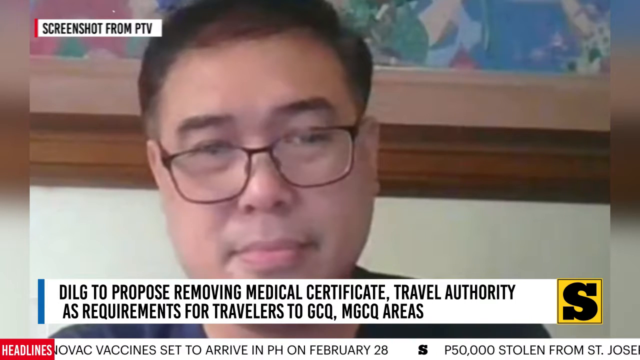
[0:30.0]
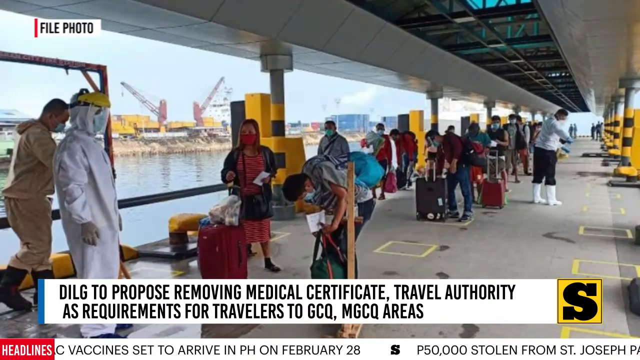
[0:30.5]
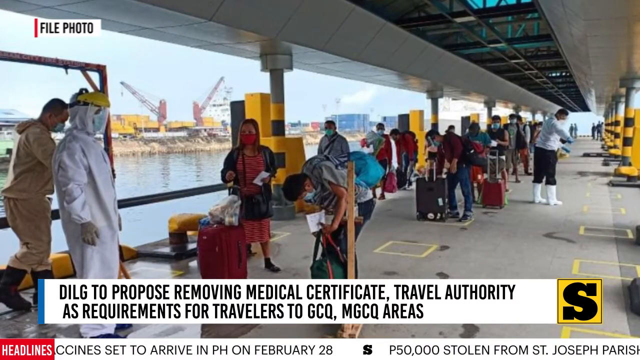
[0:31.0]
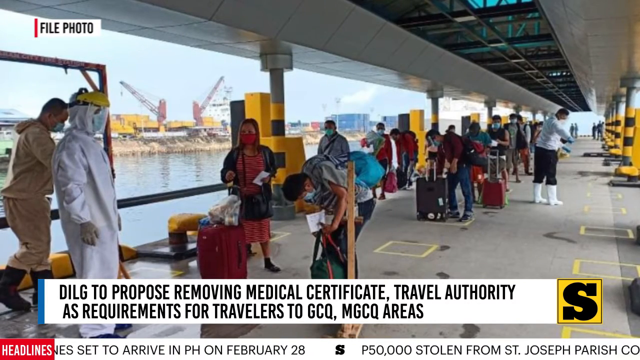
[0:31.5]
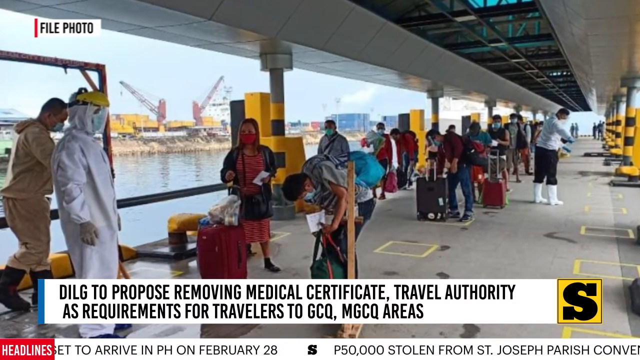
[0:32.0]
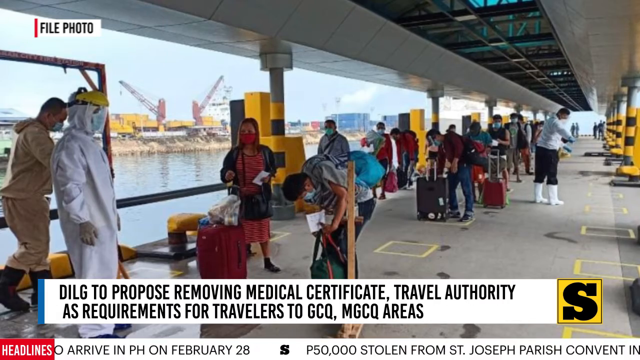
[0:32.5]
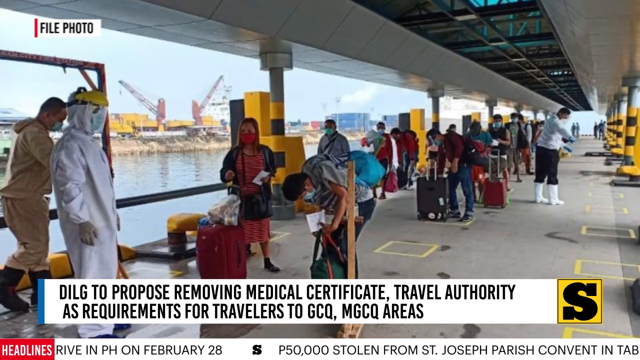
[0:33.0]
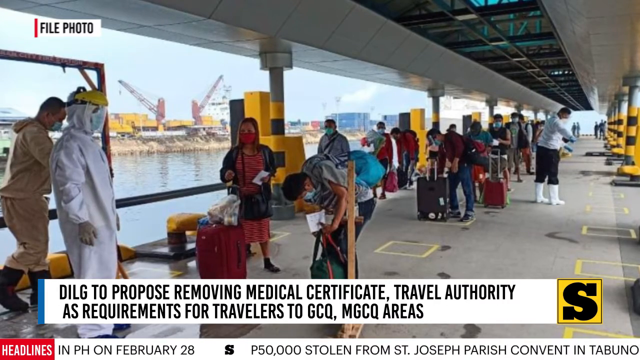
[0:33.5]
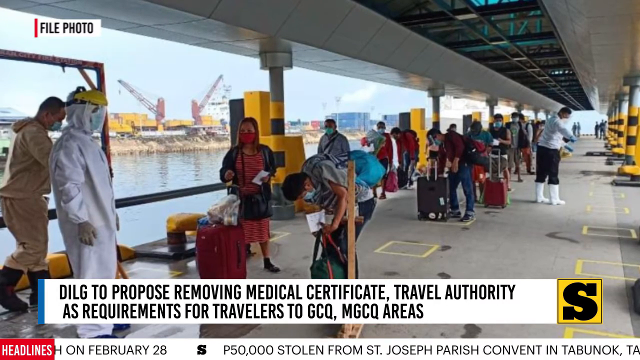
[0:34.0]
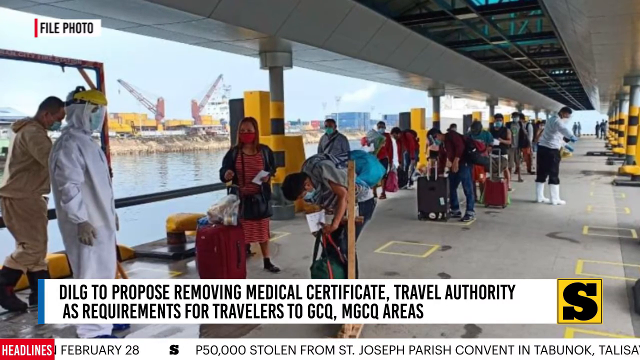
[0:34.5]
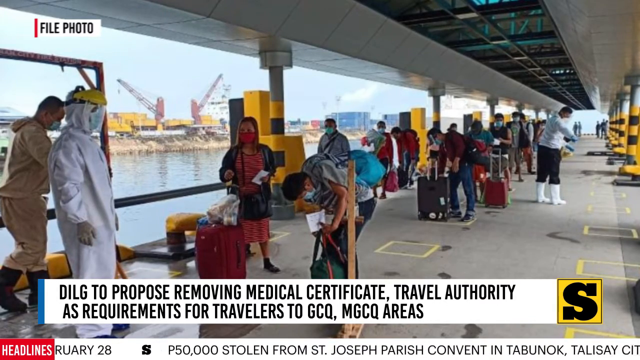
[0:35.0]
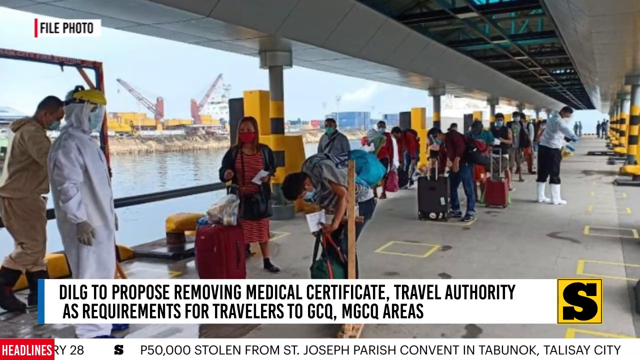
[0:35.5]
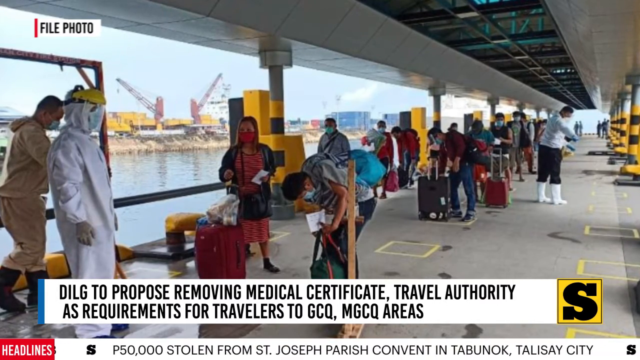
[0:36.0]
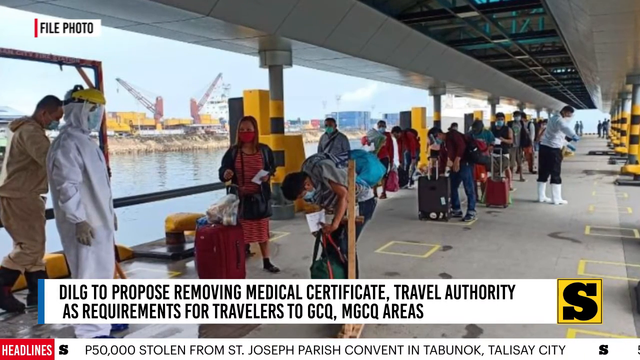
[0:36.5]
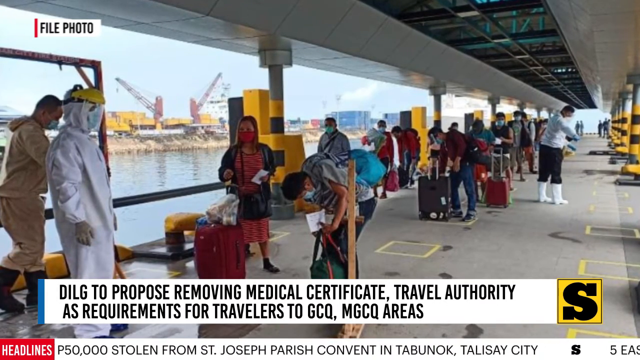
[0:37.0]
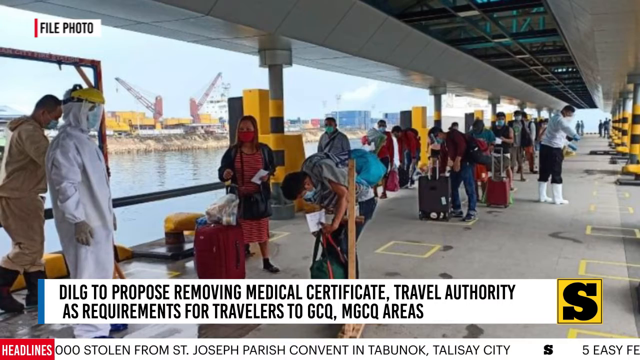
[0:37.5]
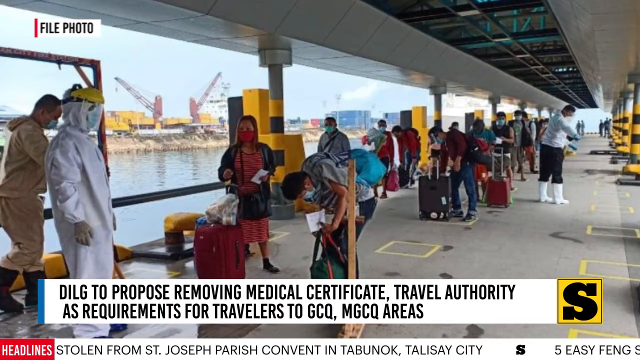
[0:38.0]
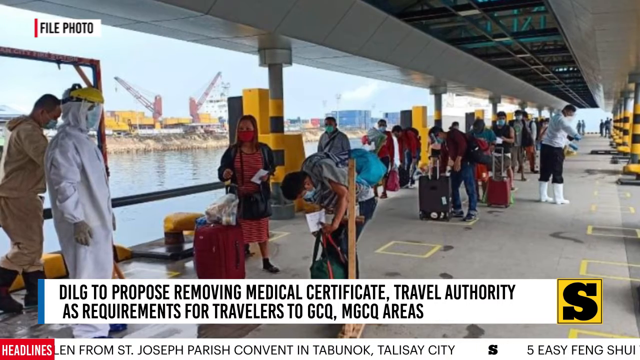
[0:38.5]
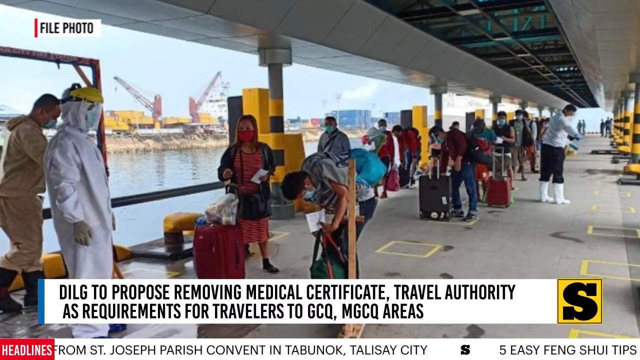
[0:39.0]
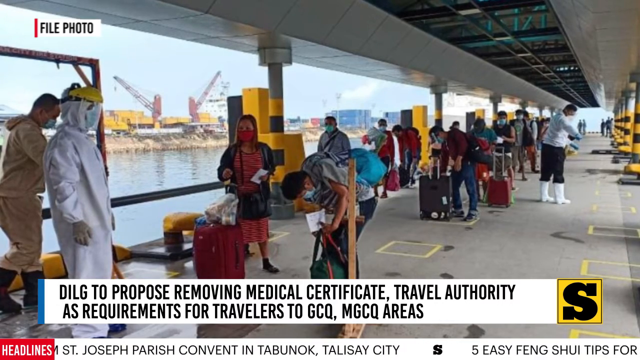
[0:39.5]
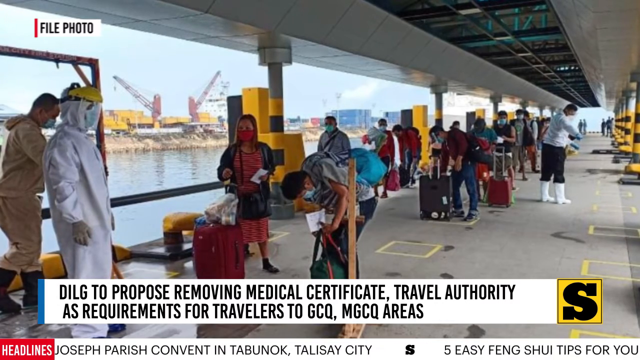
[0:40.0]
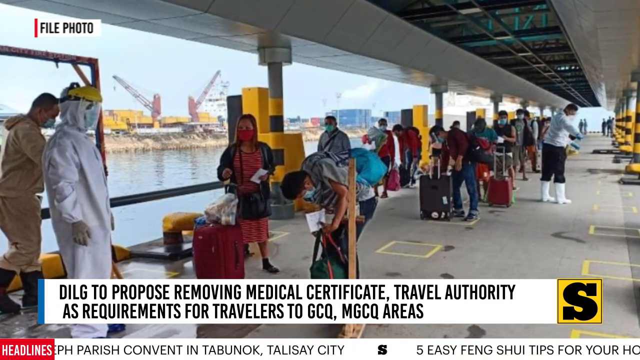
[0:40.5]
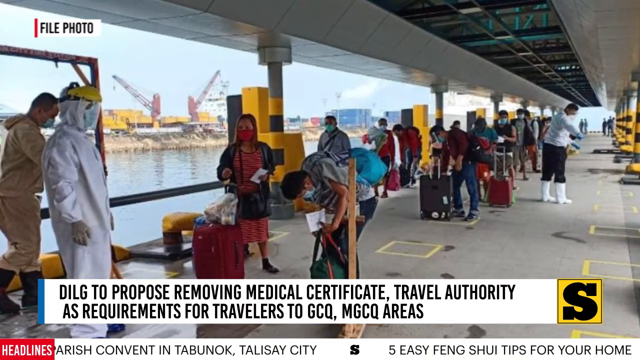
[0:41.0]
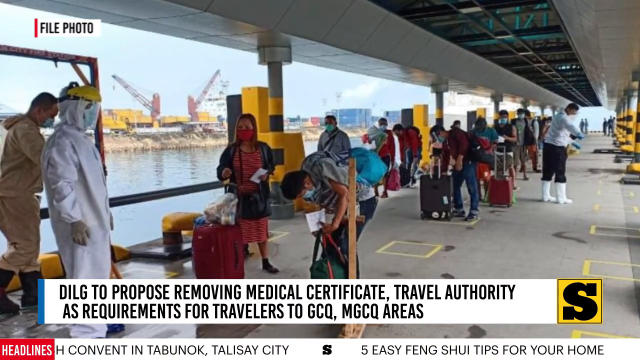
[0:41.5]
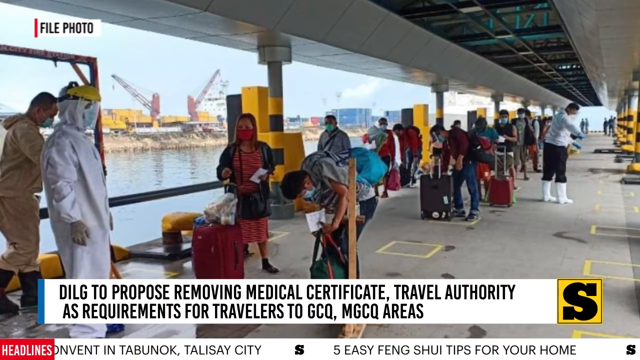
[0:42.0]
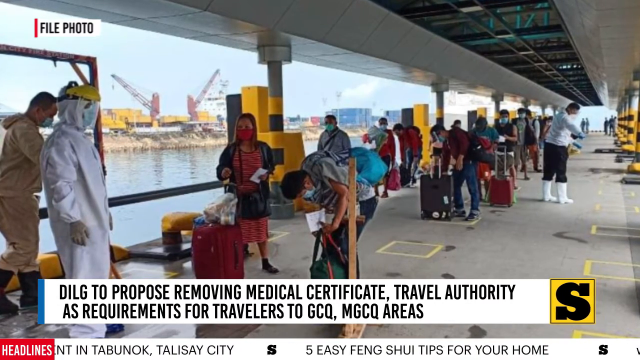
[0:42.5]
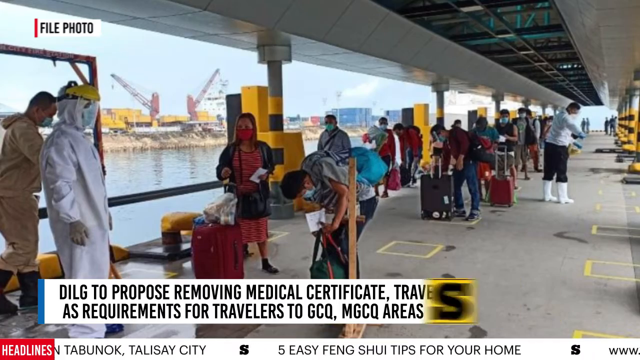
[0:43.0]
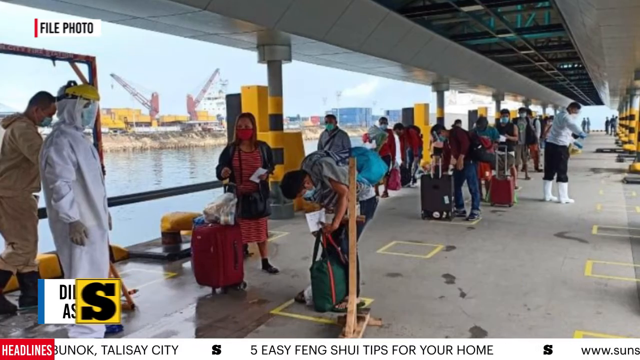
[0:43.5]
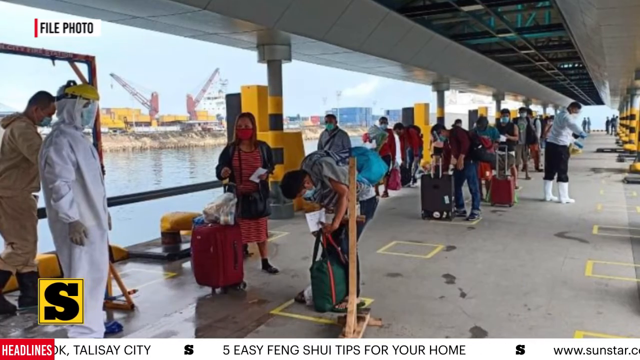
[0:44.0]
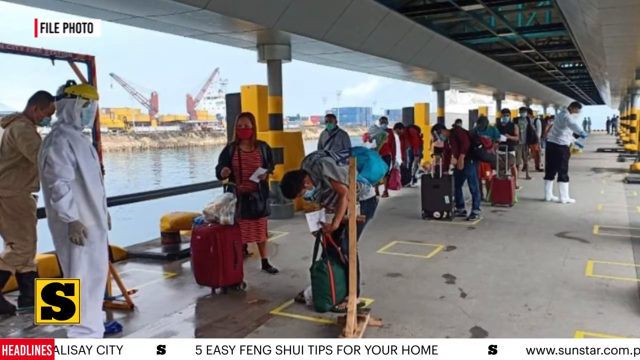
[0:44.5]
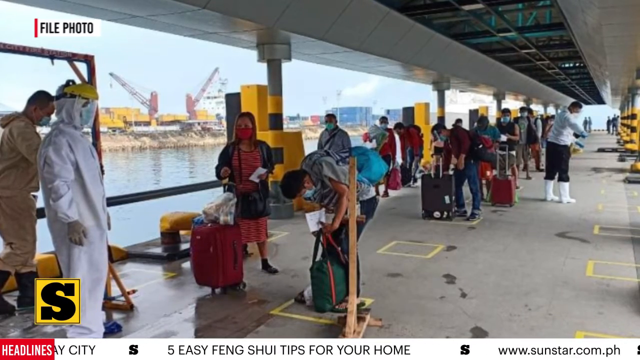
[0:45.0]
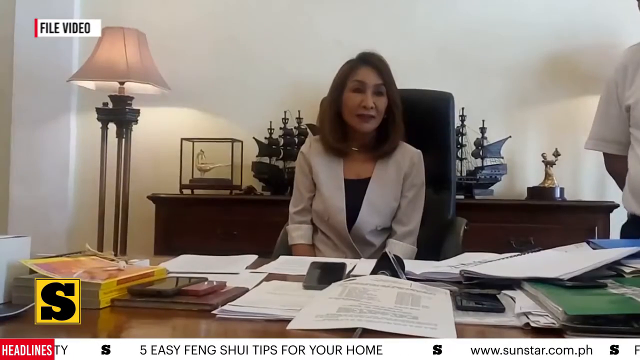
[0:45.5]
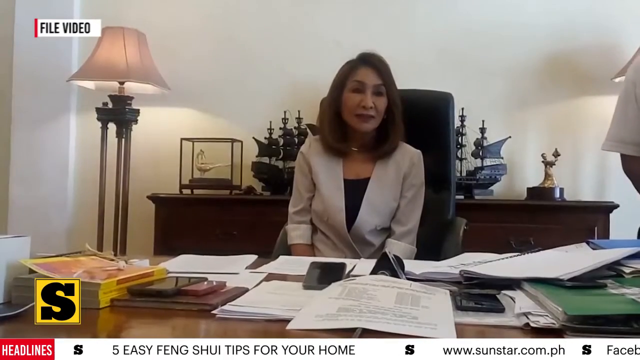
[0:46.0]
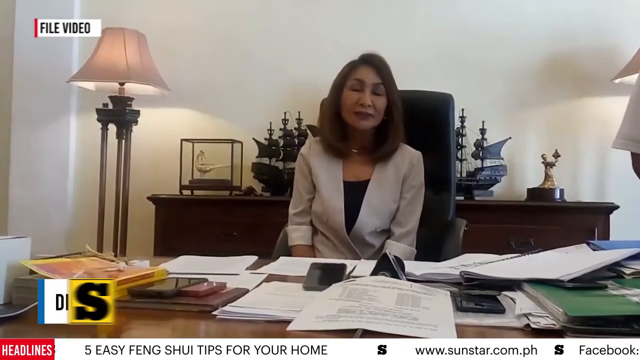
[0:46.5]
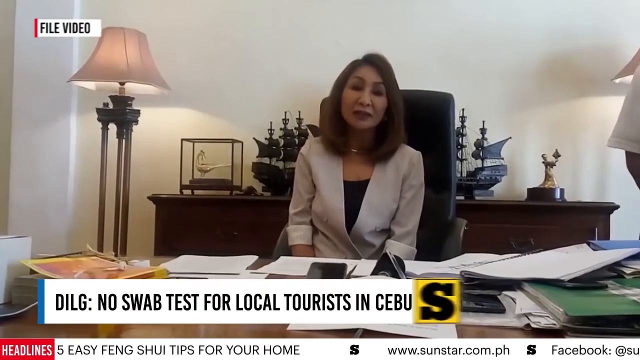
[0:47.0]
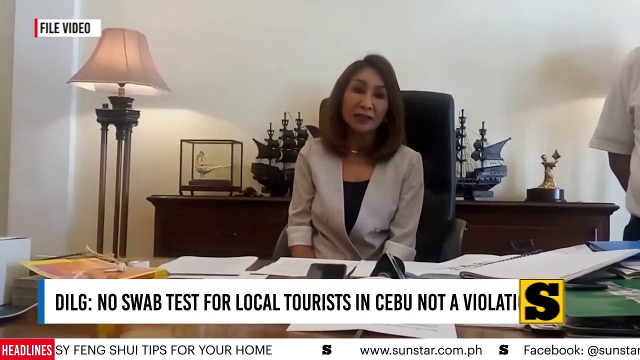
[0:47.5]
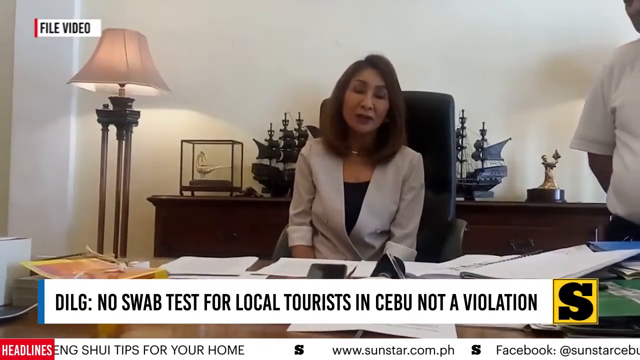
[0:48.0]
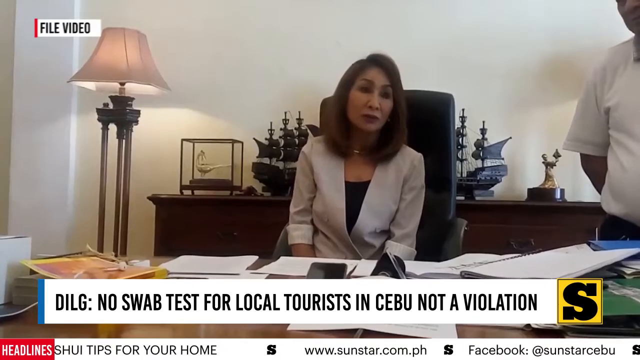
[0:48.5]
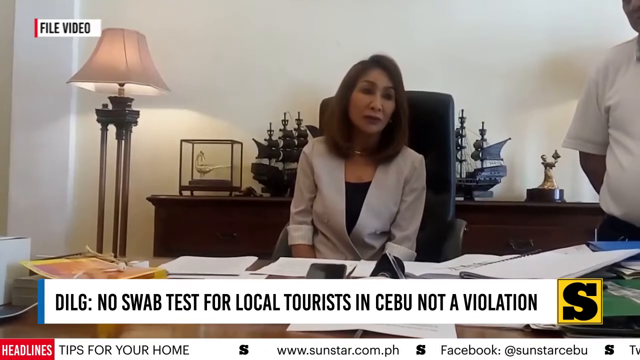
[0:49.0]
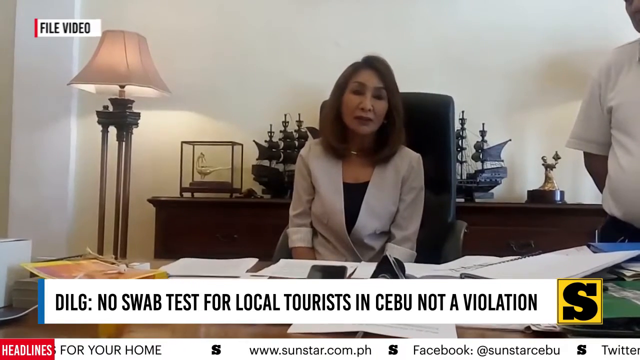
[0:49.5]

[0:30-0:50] The photo insert now fills the whole screen. What looks like a train is above on a platform, and below it is a paved walkway supported by pillars, next to a body of water. A line of people stands in this area, all with luggage and all wearing face masks, probably more than 30 in total. They are spaced out evenly, with yellow squares on the ground for each person to stand on for distancing. On the left, near the foreground, are two people in hazmat suits. The banner at the bottom is the same, and the news television logo, a black S in a yellow square, is visible. Red cranes stand in the distance next to the riverbank or body of water.